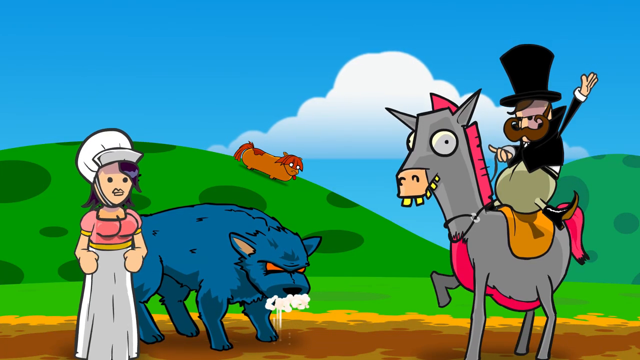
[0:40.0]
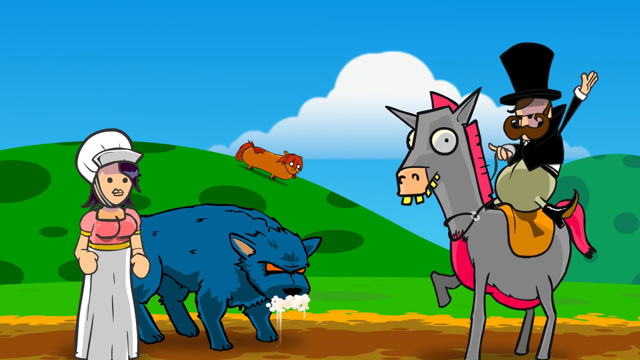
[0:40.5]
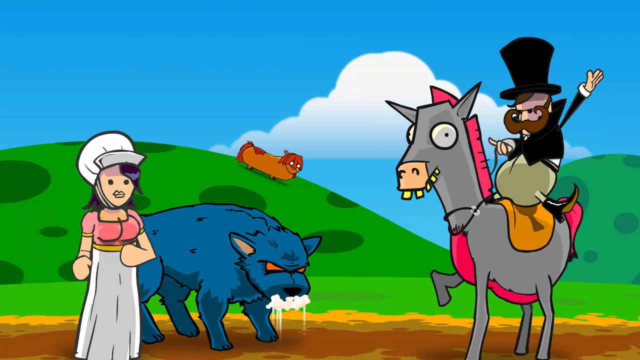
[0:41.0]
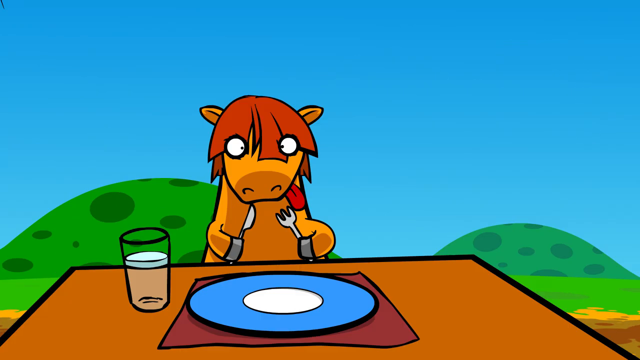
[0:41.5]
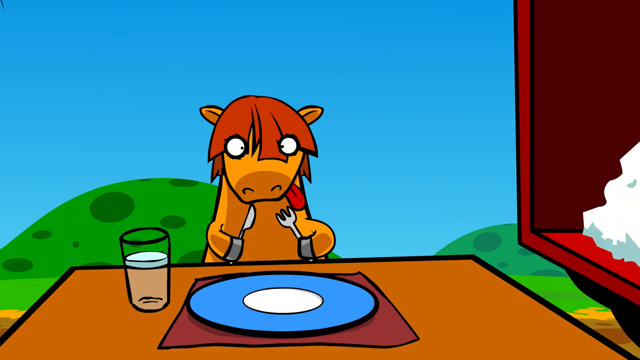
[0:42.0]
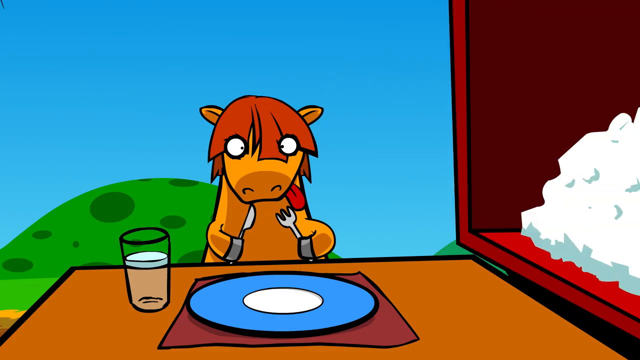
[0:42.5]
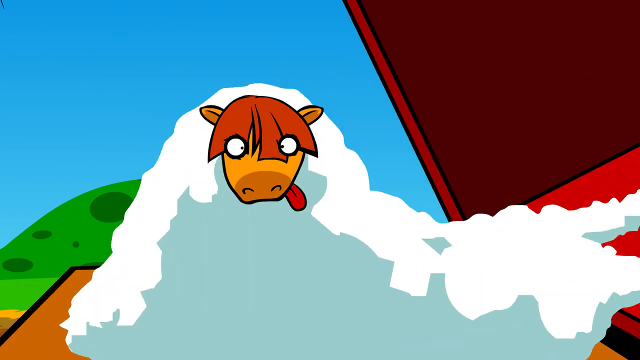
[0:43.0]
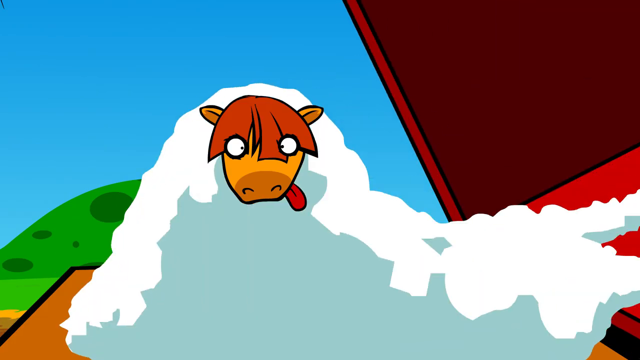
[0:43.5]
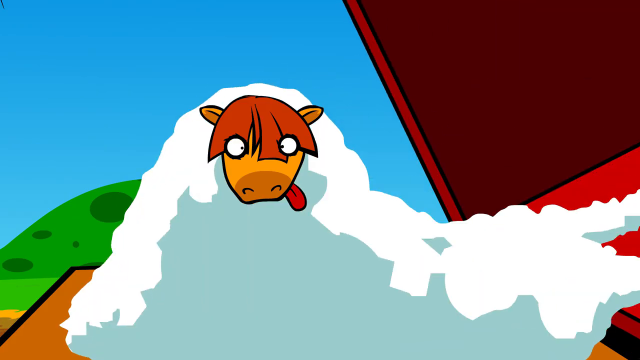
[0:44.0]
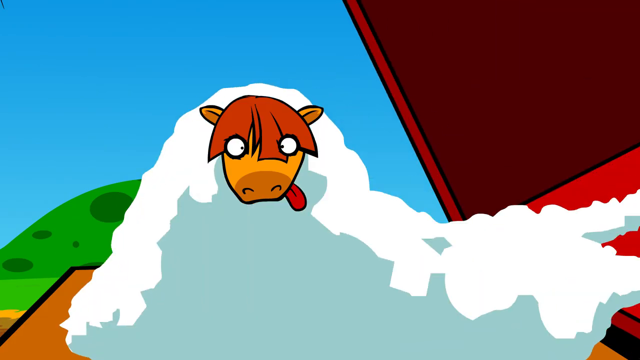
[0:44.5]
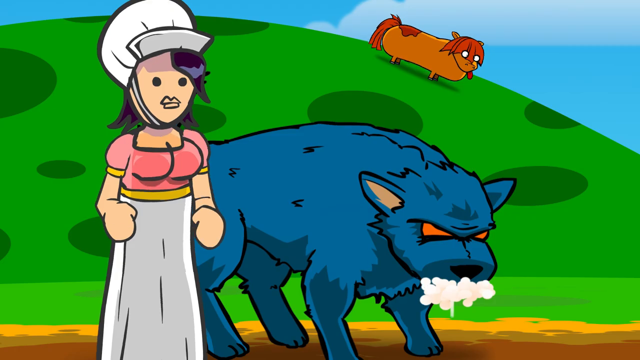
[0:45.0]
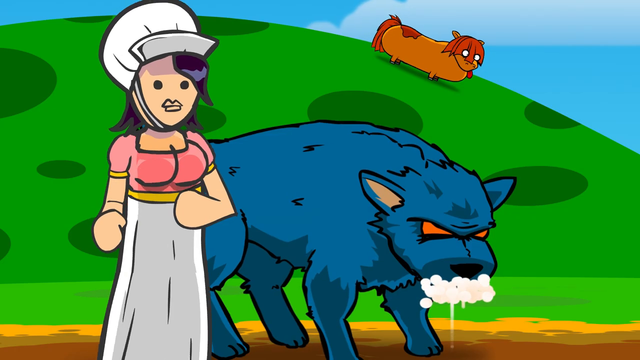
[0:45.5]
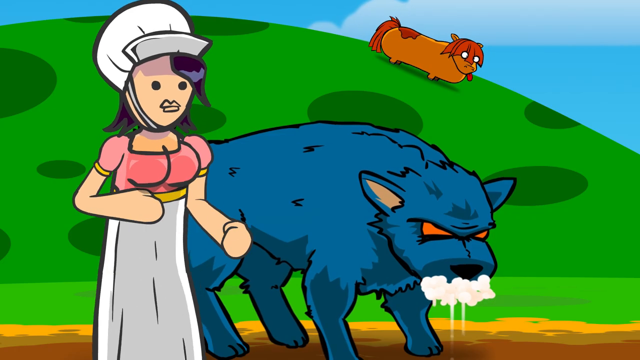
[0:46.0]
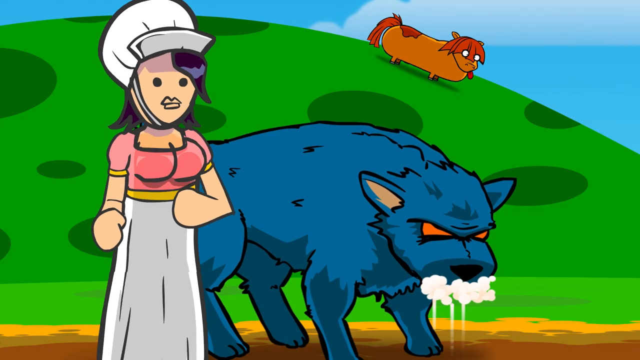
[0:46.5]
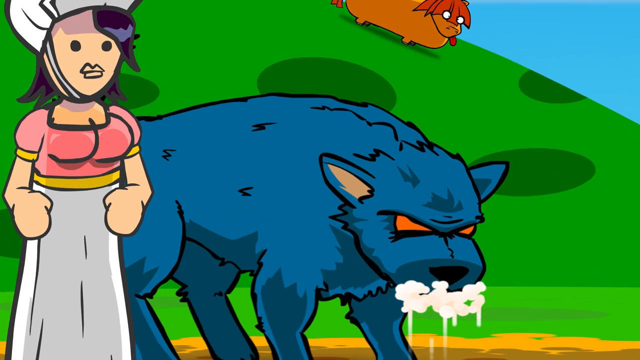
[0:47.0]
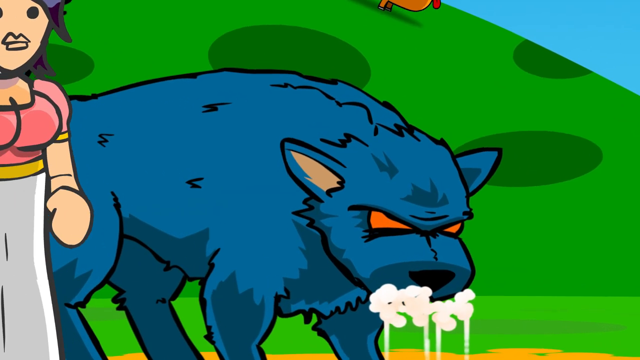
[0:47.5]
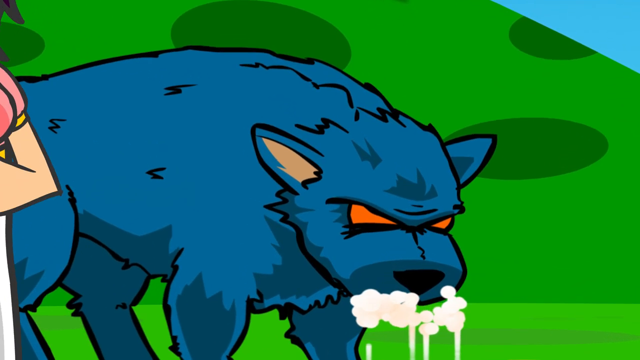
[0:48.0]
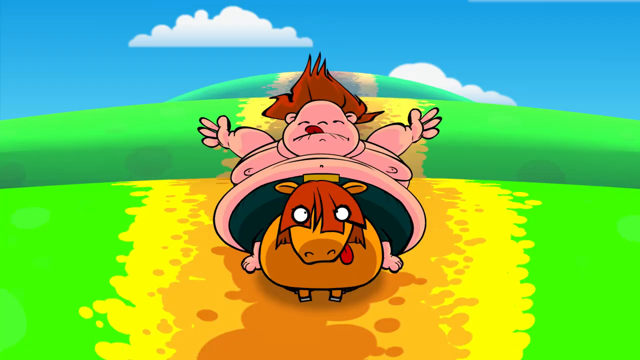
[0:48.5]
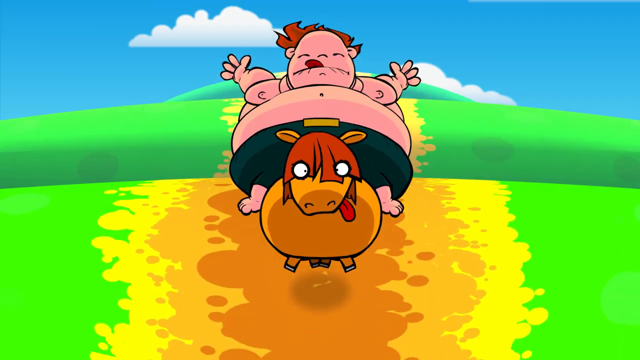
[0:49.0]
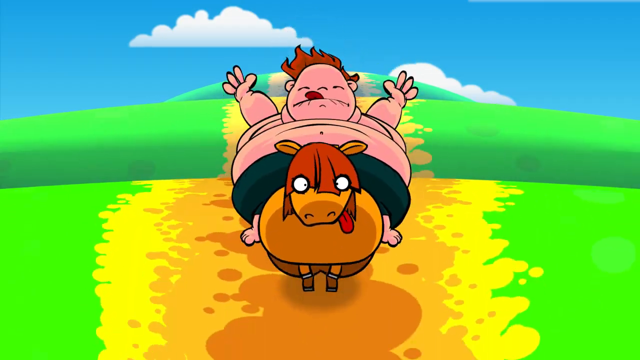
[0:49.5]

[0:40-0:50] The cow and the person riding the horse have a conversation, and the horse rider raises his left hand, waving toward the girl. The girl is on the left, facing right. Next the cow is sitting on a brown dinner table, with a pink cloth under a blue plate and a glass of milk on the left; the cow holds a fork and knife, preparing its meal. On the right, the tail part of a dump truck dumps white stuff on top of the cow. Then the wolf appears, angry and growling, with the bubbles at its mouth increasing.